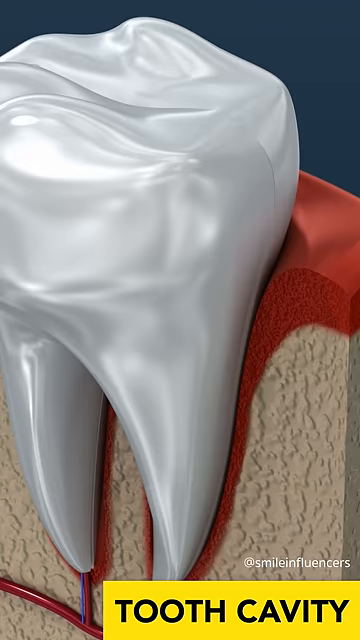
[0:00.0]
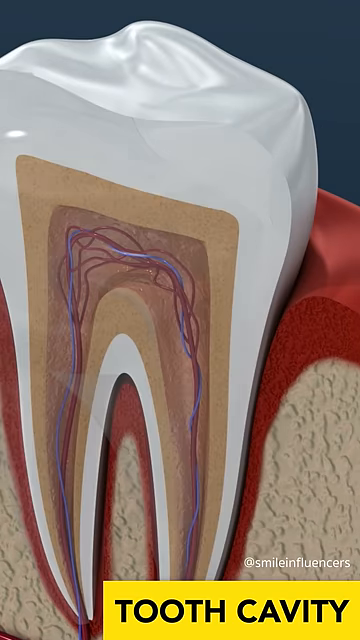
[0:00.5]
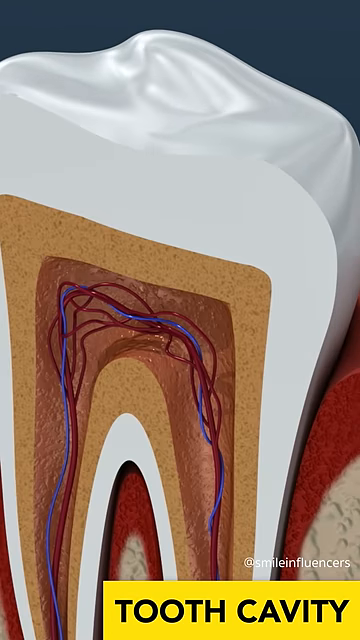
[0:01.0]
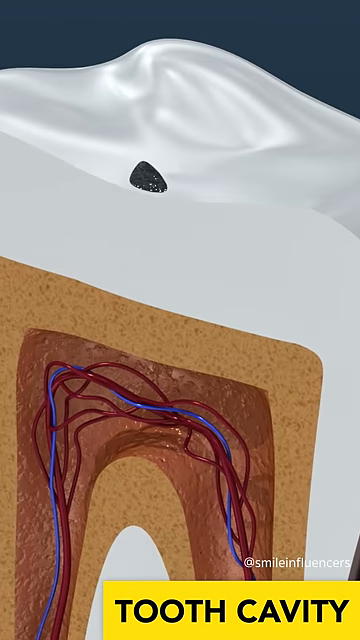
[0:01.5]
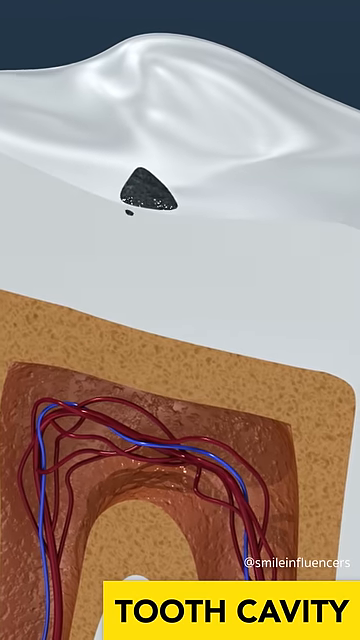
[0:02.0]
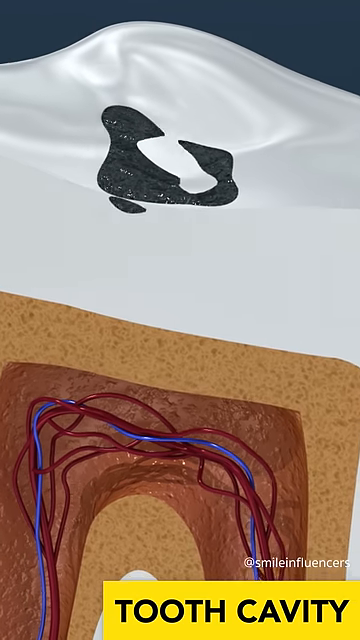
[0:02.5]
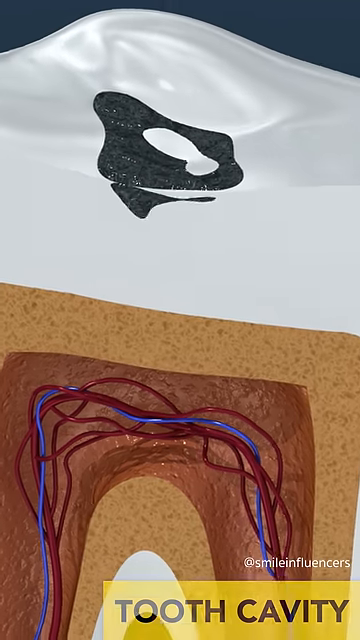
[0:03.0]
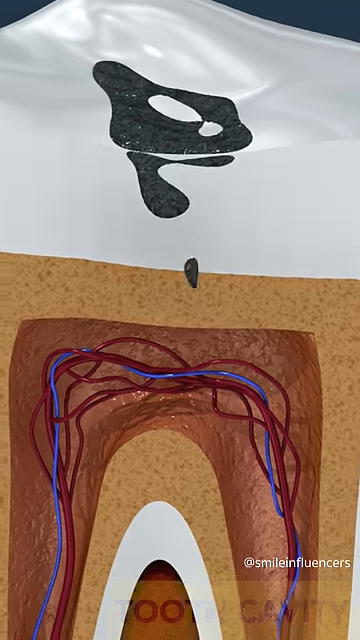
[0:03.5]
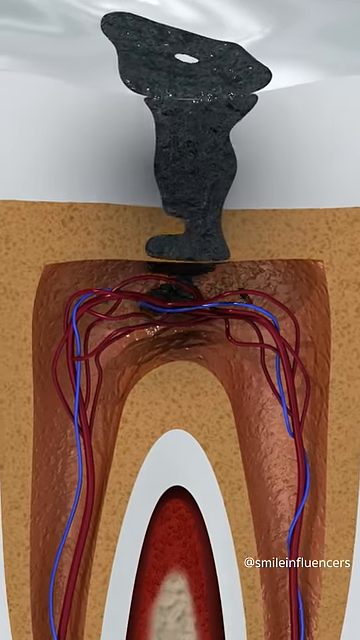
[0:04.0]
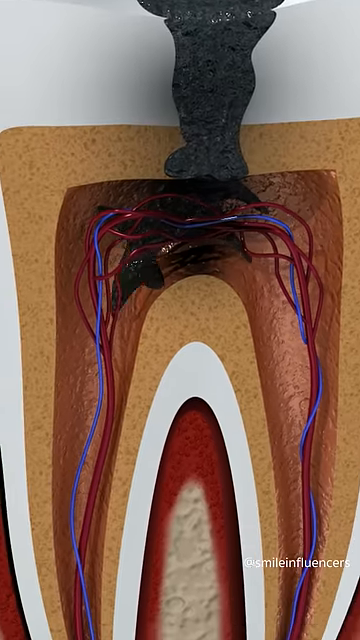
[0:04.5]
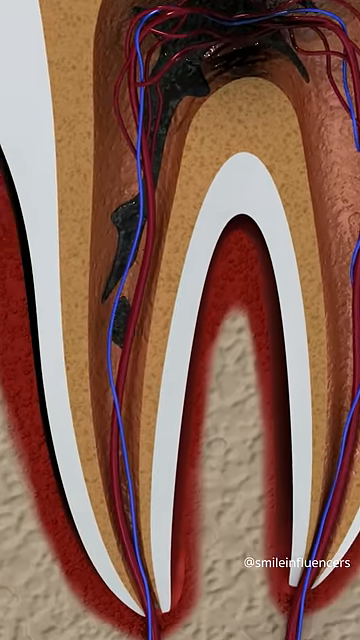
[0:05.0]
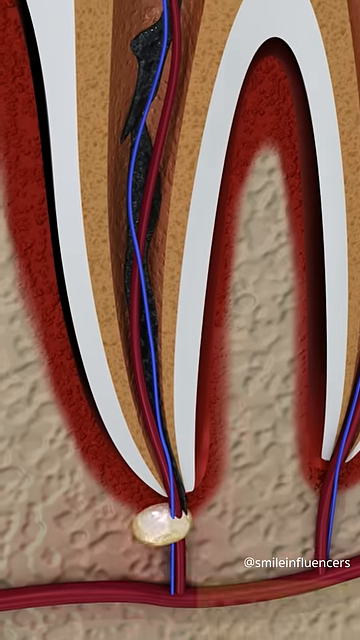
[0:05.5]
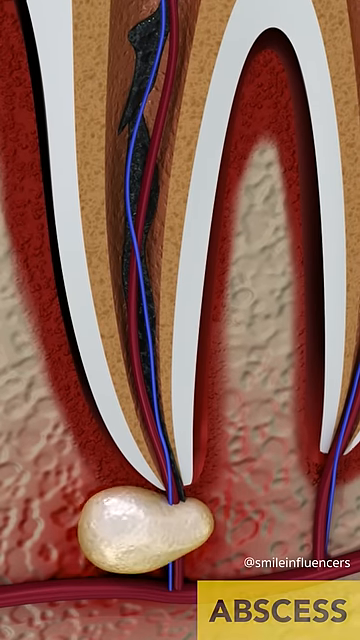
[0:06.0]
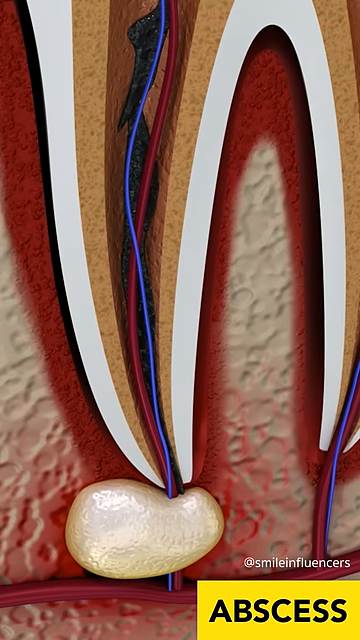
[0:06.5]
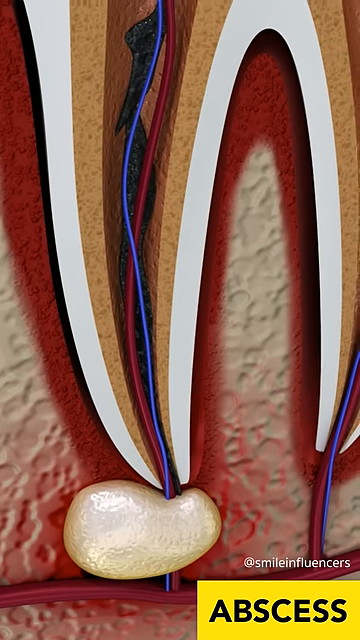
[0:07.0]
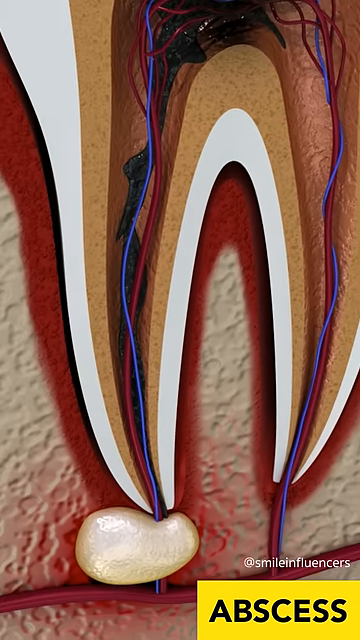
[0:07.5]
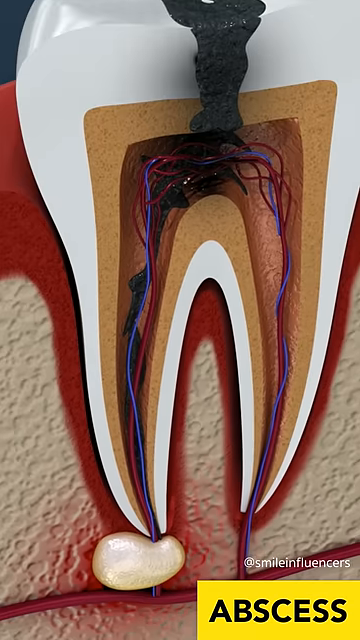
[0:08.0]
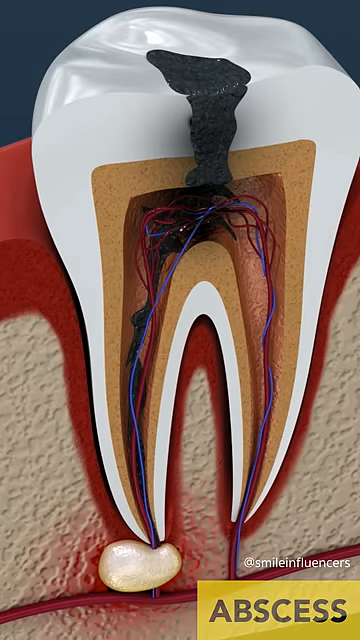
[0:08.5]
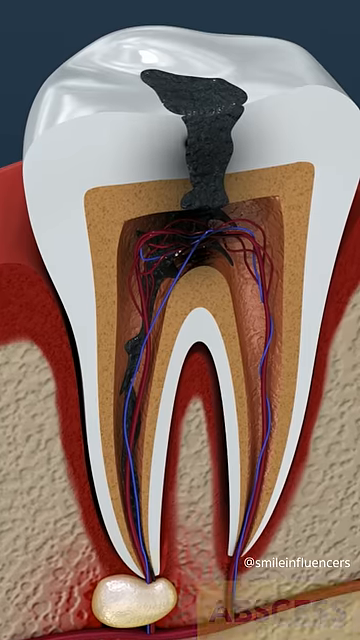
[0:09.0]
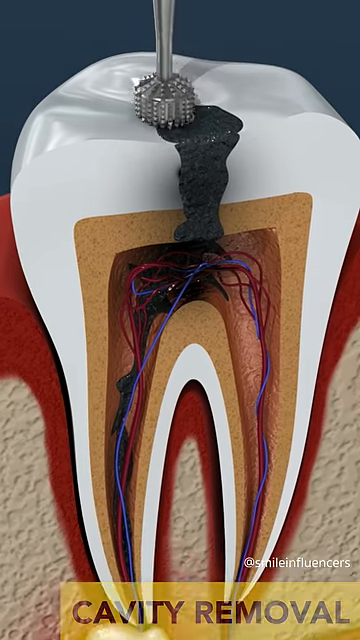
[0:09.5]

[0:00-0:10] A tooth cavity is shown on a tooth, with kind of a black area extending downward and reaching the nerves, which are shown in red and blue in the picture. The name smile influencers is visible. The tooth looks very three-dimensional and very natural at the top, and the dentin and the outer enamel are visible.